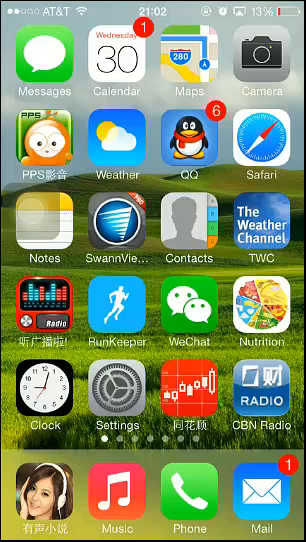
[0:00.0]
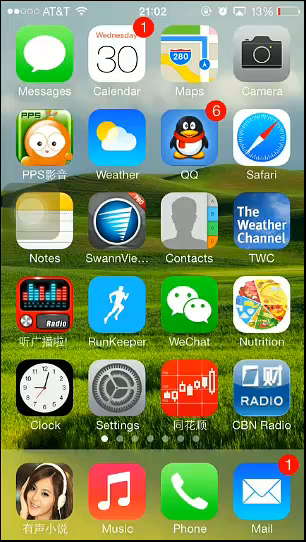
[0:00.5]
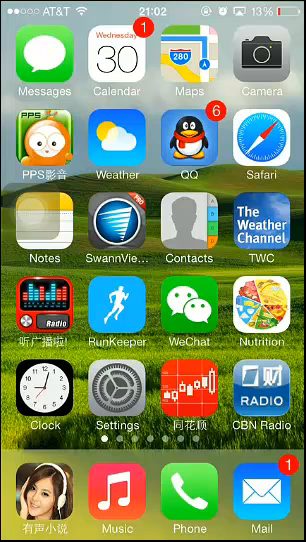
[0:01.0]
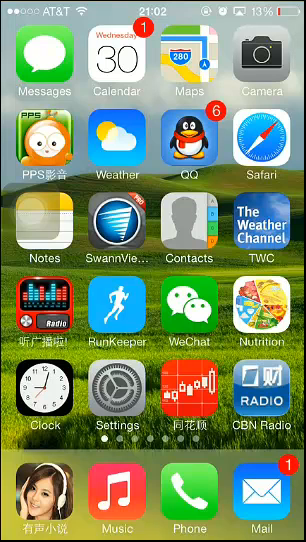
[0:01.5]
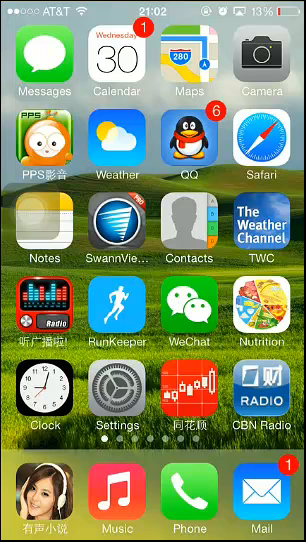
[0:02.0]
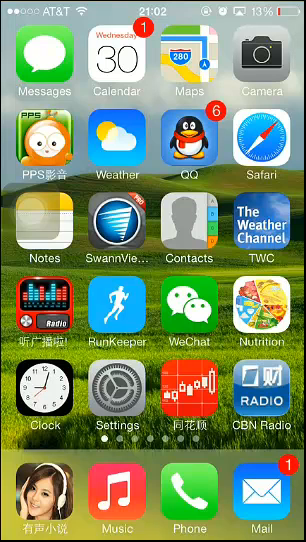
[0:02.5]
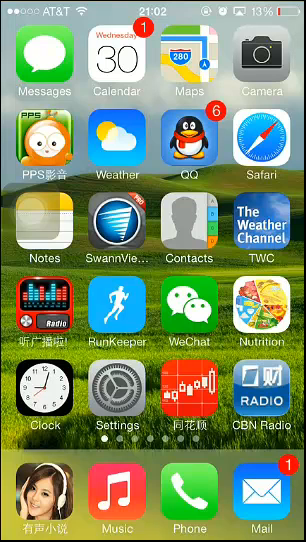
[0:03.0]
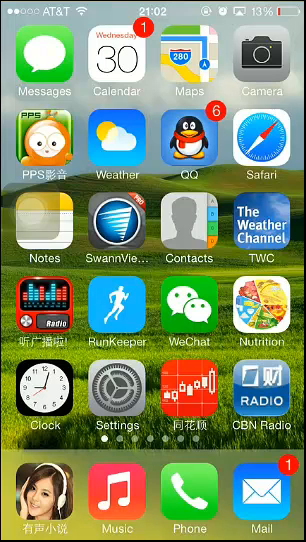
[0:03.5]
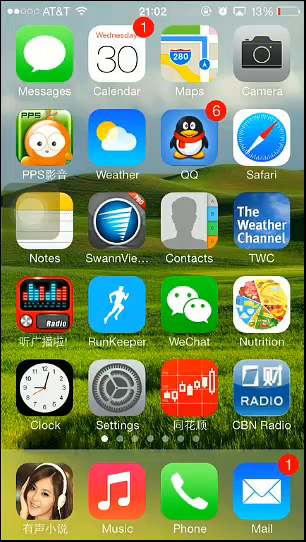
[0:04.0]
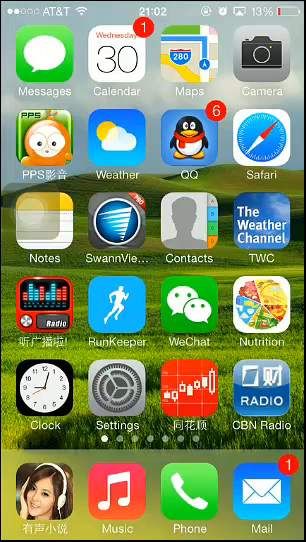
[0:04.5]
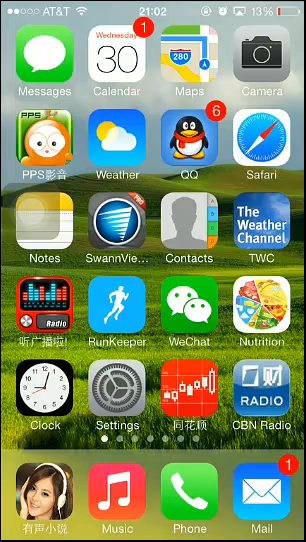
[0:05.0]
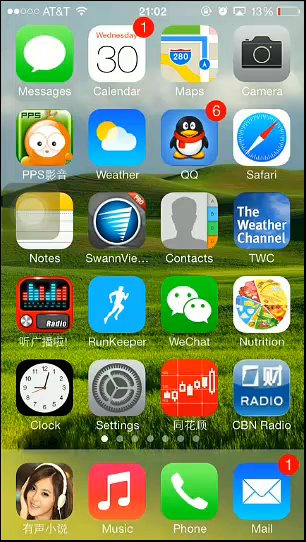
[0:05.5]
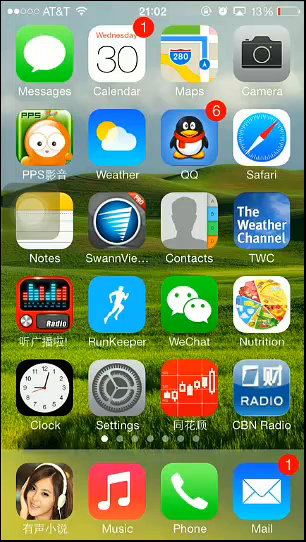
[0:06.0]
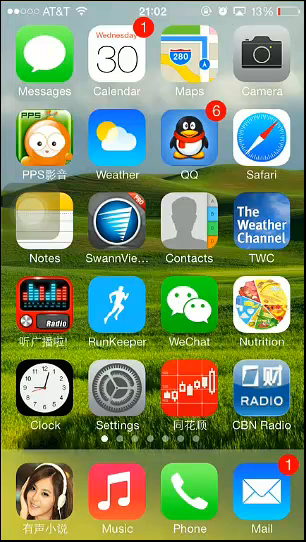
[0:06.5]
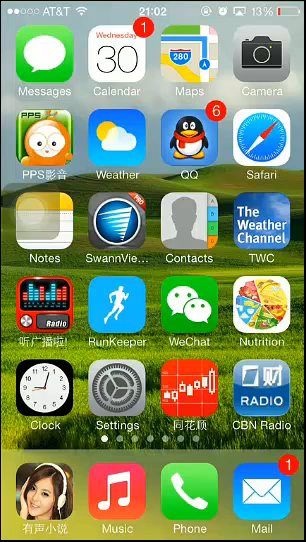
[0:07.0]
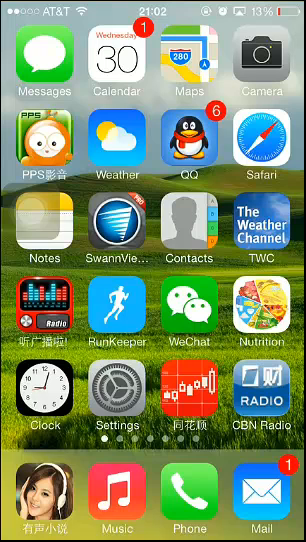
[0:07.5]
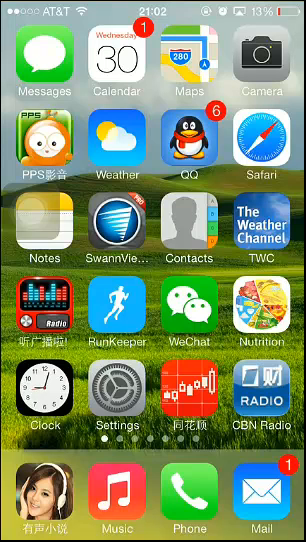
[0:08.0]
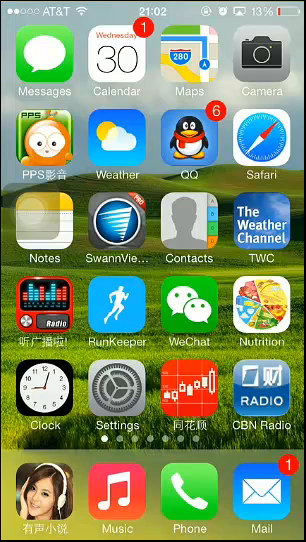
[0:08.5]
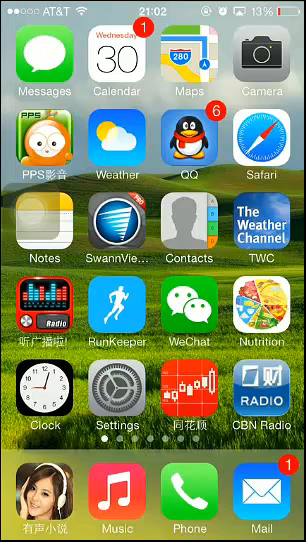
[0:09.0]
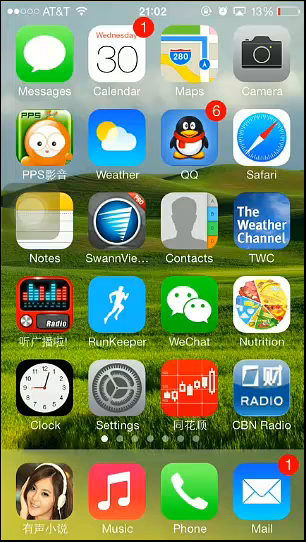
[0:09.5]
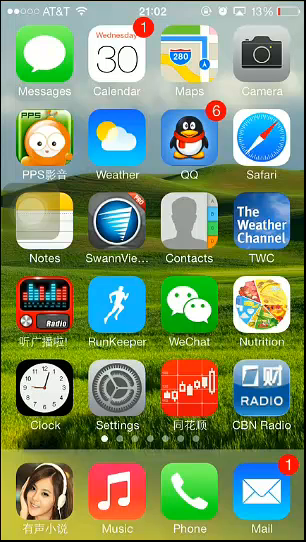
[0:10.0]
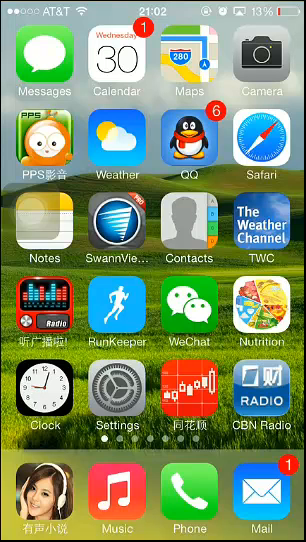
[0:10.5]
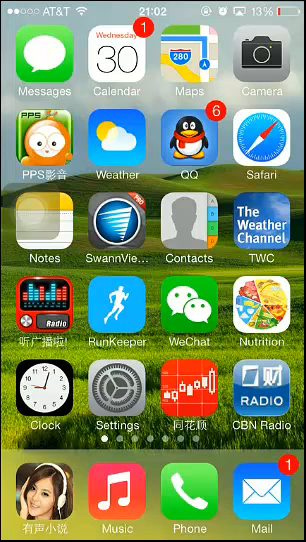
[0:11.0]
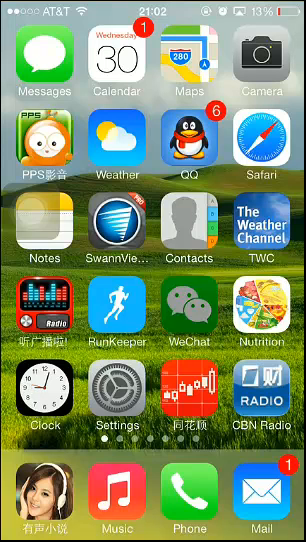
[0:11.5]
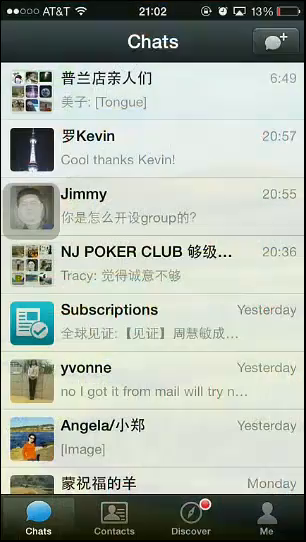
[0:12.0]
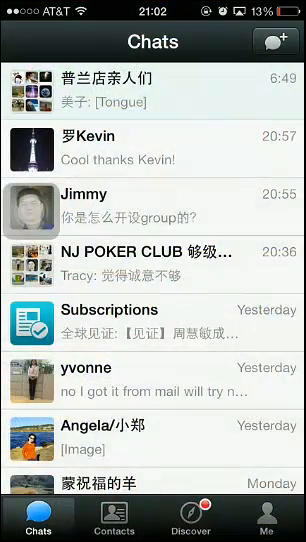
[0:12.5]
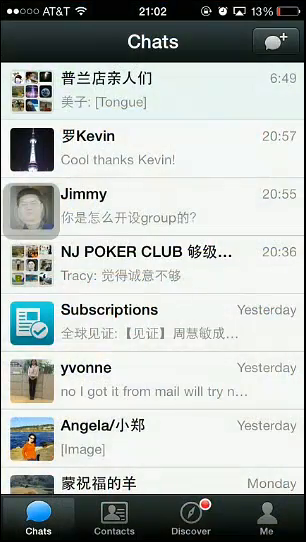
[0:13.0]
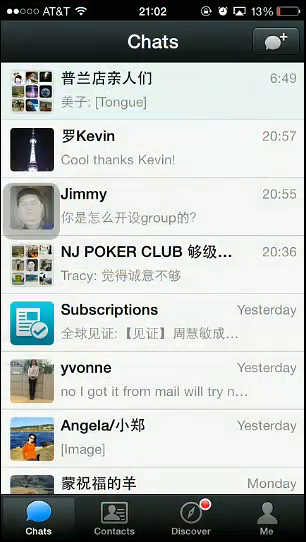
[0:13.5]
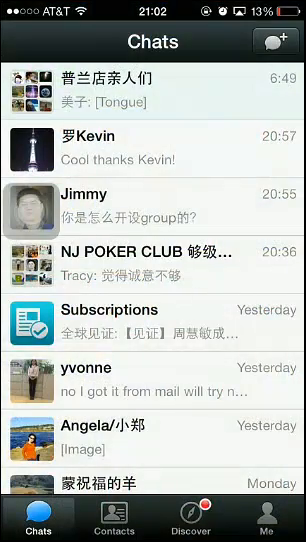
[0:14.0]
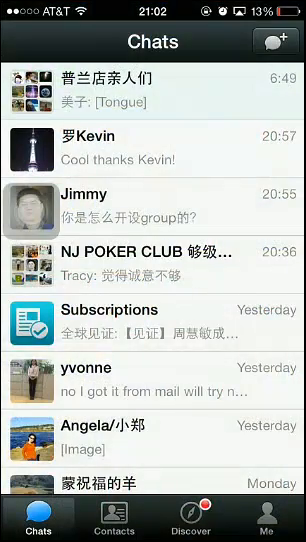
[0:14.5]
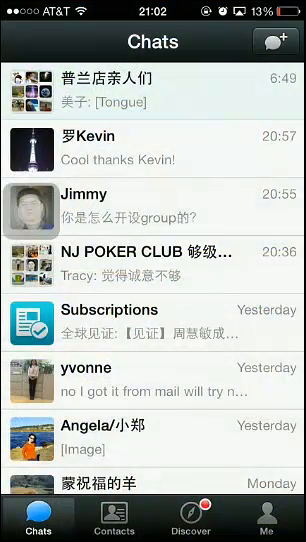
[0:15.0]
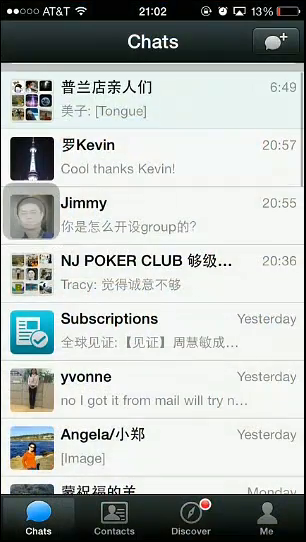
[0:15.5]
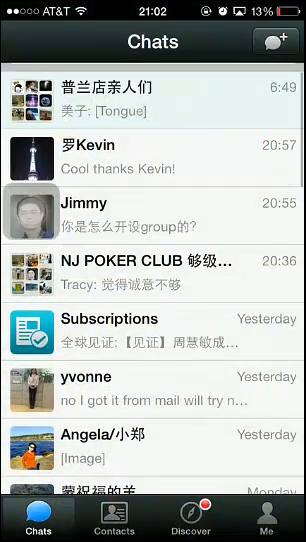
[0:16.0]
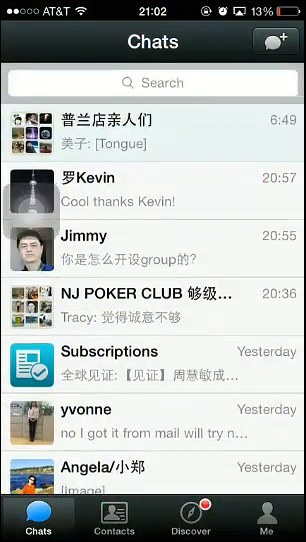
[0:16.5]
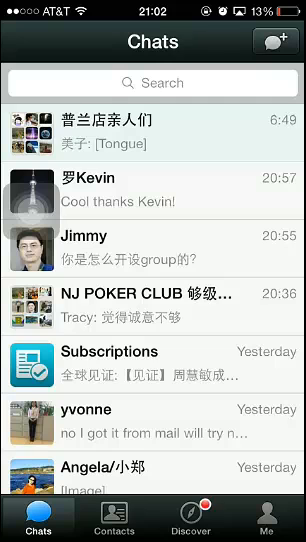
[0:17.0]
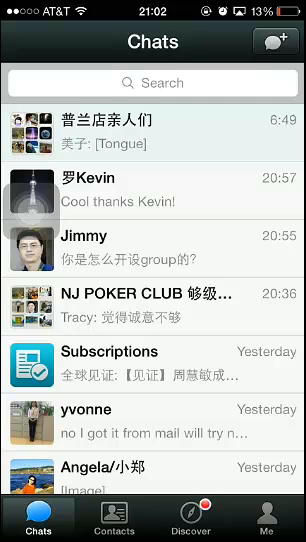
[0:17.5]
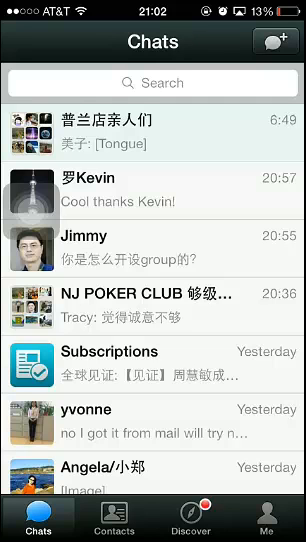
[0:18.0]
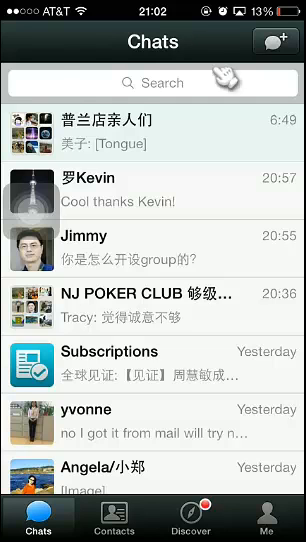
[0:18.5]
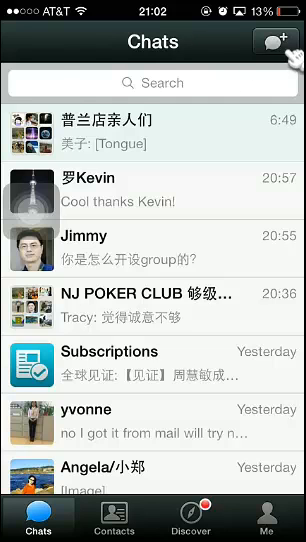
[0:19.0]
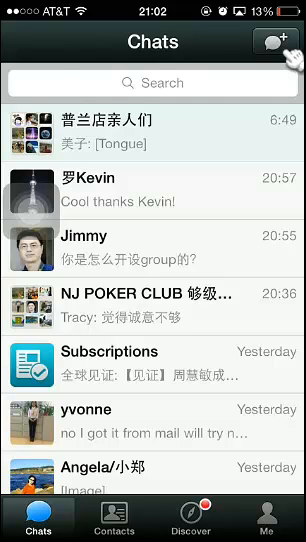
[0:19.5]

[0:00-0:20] Several apps are displayed on a smartphone: Messages, Calendar, Maps, Camera, PPS, Weather, QQ, Safari, Notes, Swan View, Contact and The Weather Channel. The battery is at 13%, which is low. The service provider is AT&T, but the phone is using Wi-Fi. The time is 21:02 and the date is Wednesday. The calendar has one notification, QQ has six notifications, and the email app has one notification. The wallpaper is a mountain covered in even green grass, with some bumps here and there, under a cloudy sky. The user taps the WeChat app, which shows a list of conversations: a group at the top, followed by Kevin, where the user's last message reads "Cool, thanks, Kevin", then Jimmy, the NJ Poker Club, Subscriptions, Yvonne, Angela and plenty of other people.